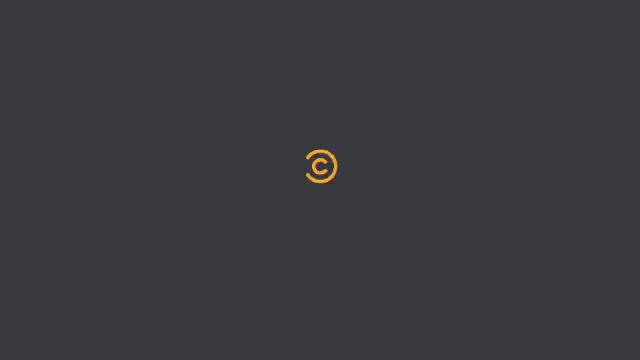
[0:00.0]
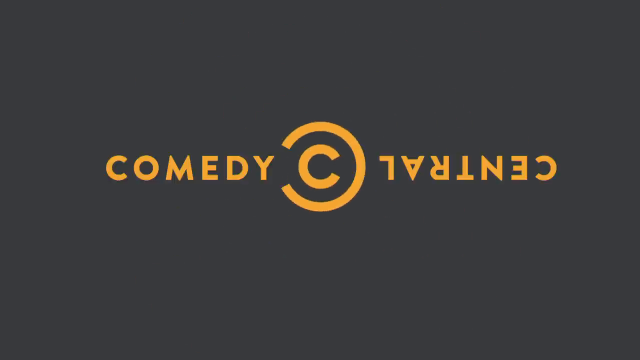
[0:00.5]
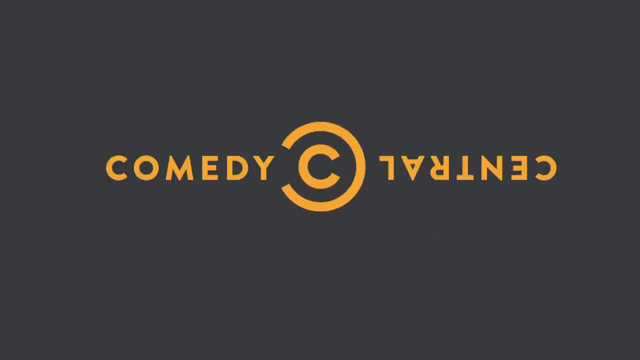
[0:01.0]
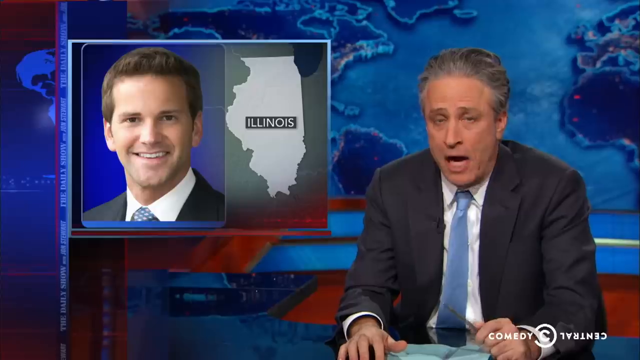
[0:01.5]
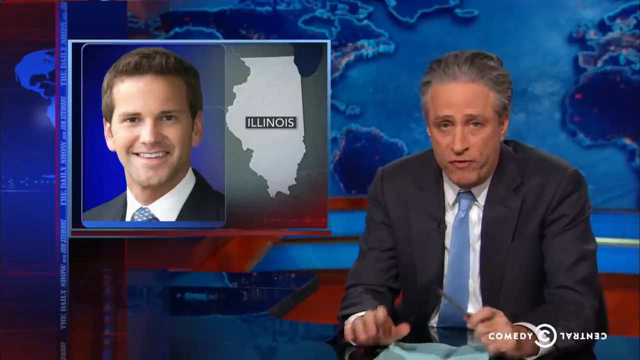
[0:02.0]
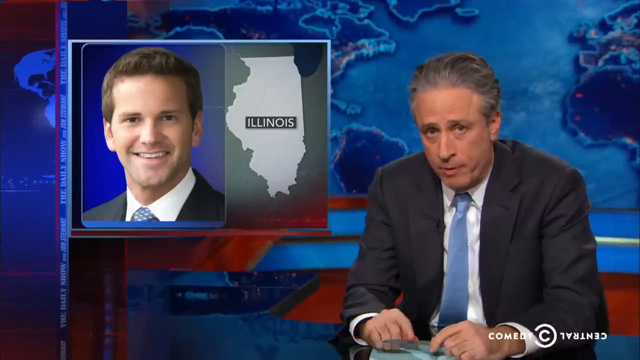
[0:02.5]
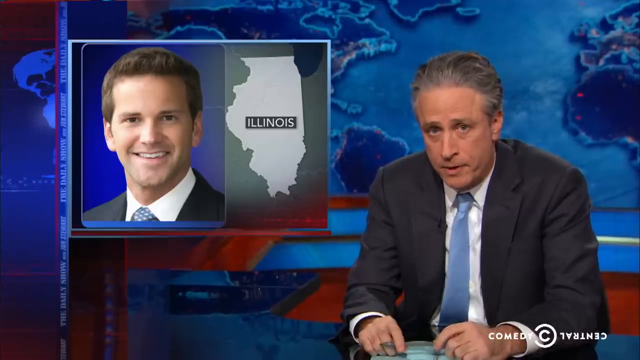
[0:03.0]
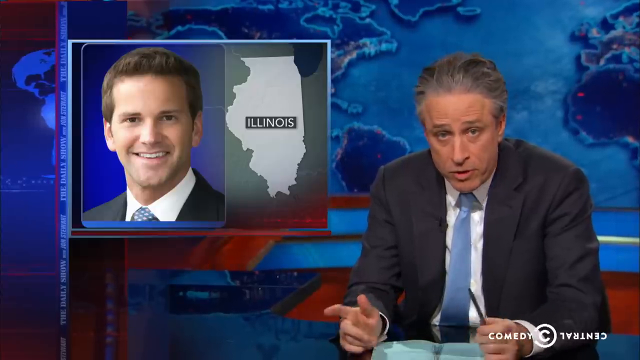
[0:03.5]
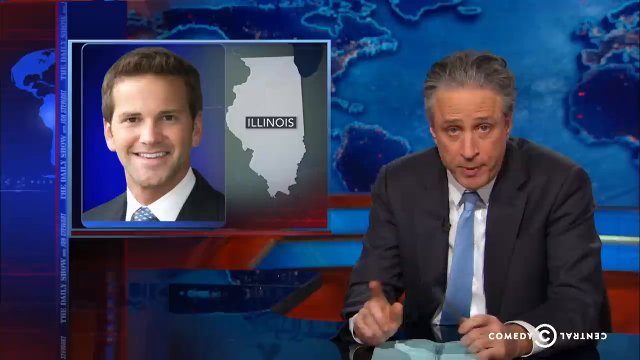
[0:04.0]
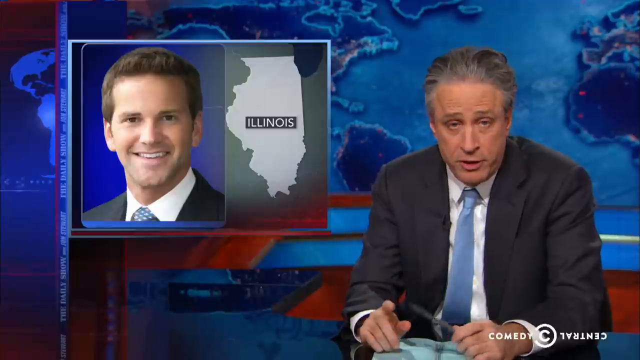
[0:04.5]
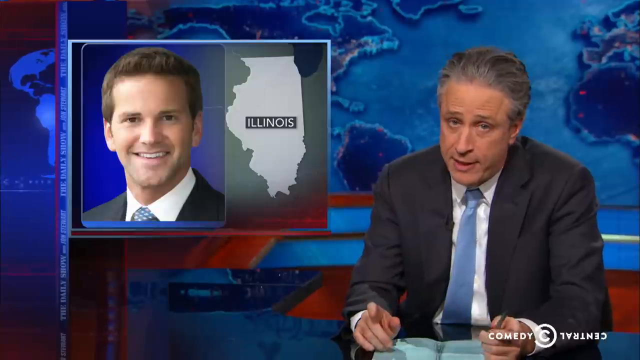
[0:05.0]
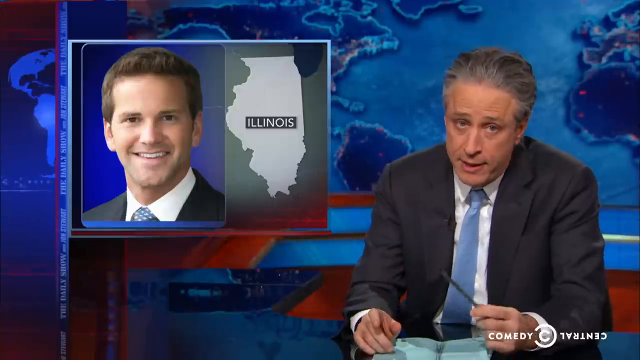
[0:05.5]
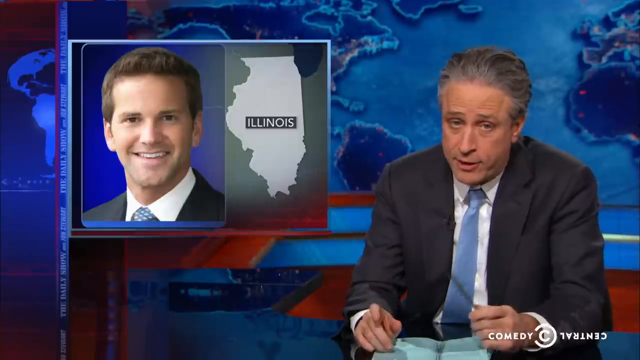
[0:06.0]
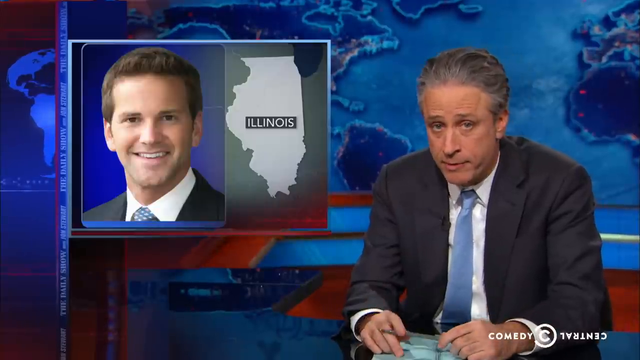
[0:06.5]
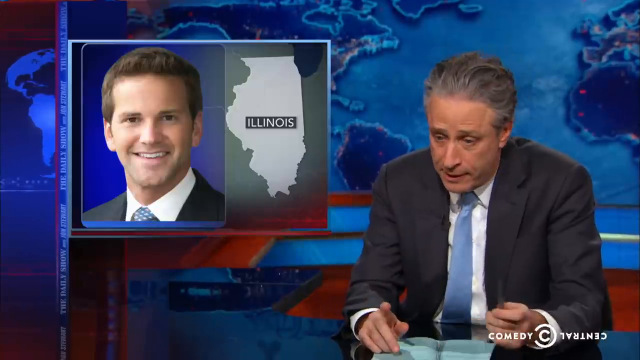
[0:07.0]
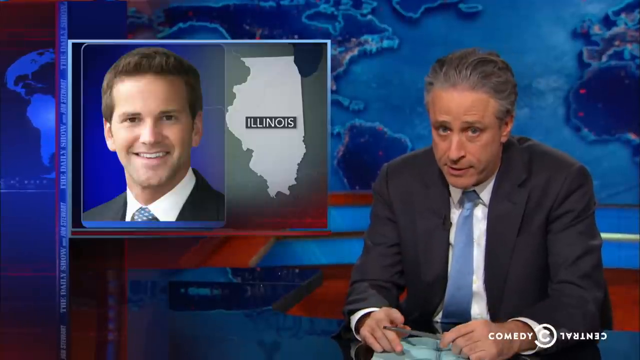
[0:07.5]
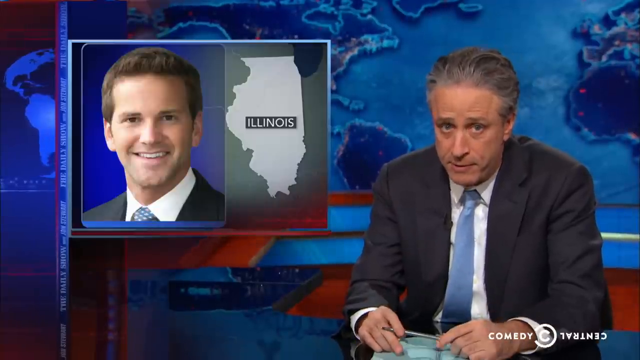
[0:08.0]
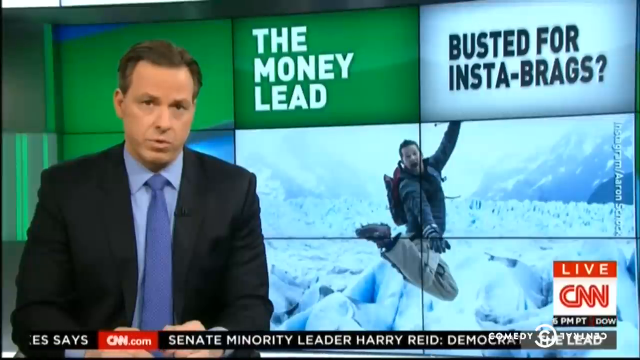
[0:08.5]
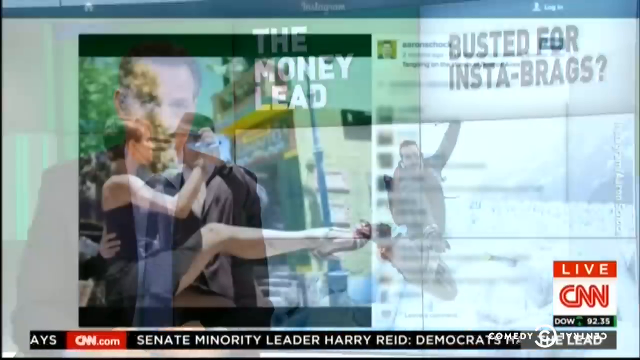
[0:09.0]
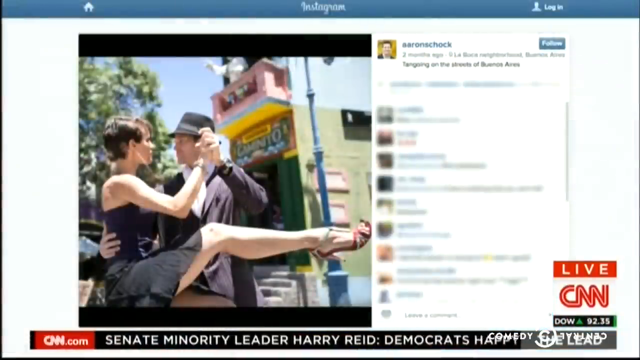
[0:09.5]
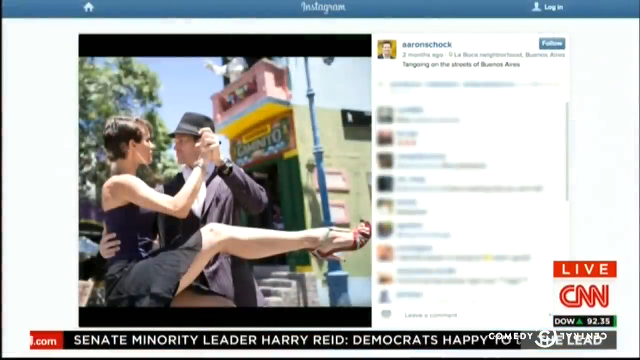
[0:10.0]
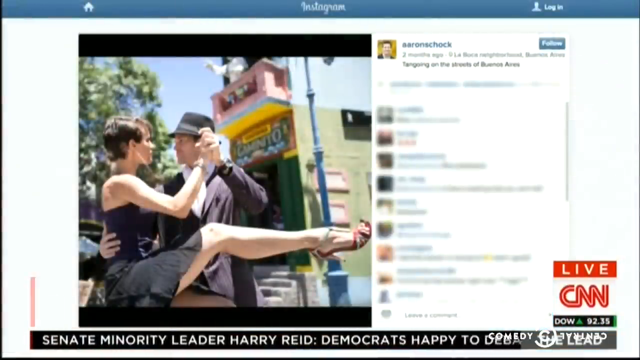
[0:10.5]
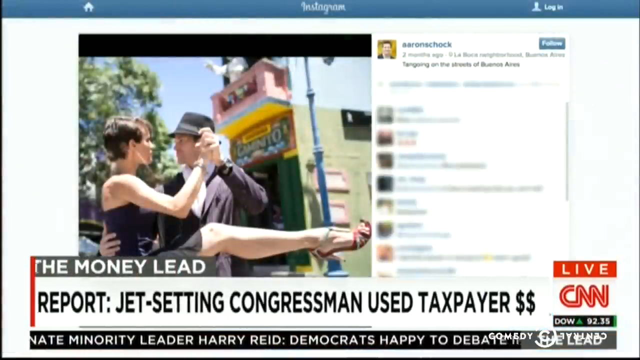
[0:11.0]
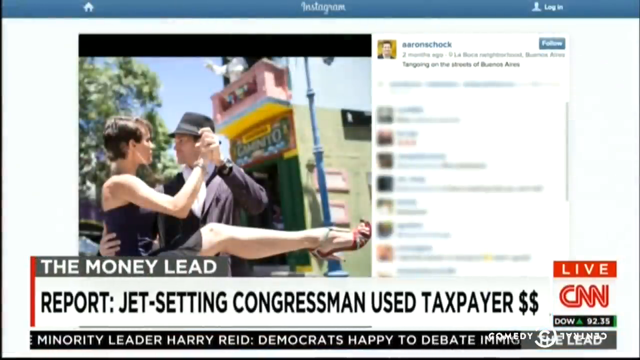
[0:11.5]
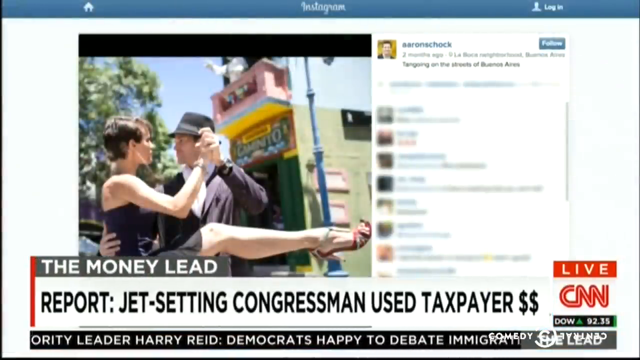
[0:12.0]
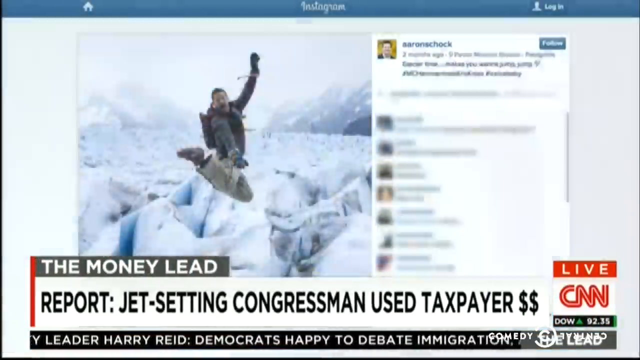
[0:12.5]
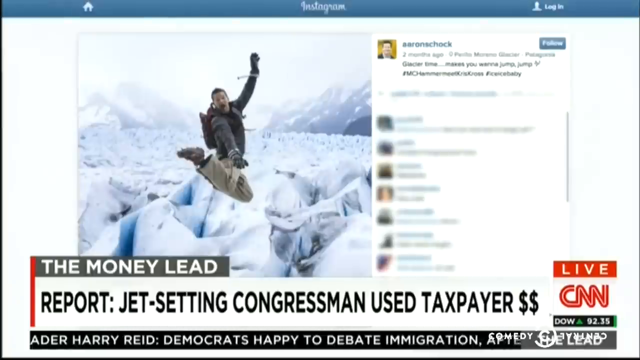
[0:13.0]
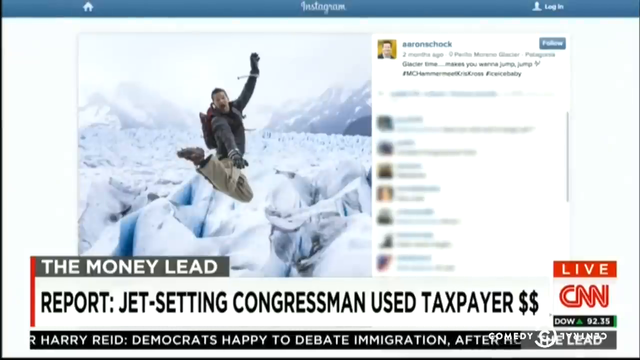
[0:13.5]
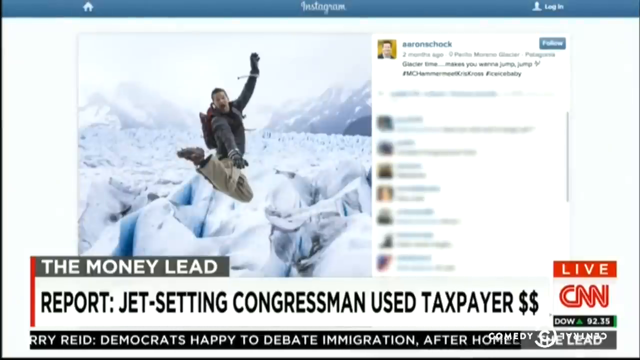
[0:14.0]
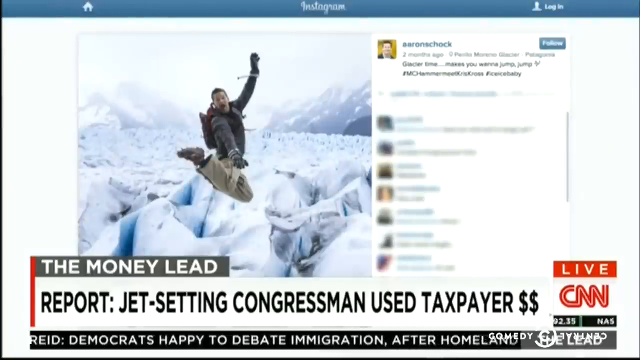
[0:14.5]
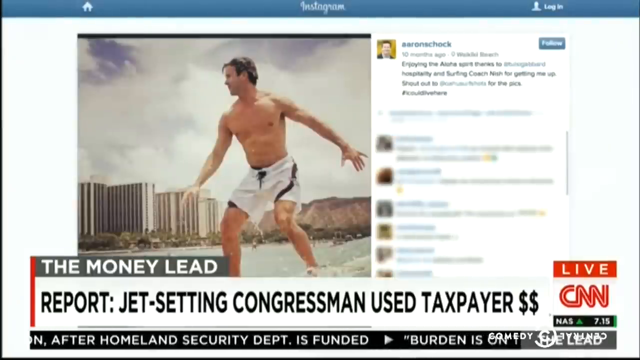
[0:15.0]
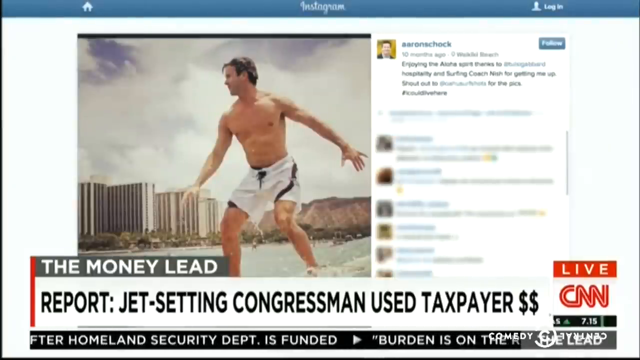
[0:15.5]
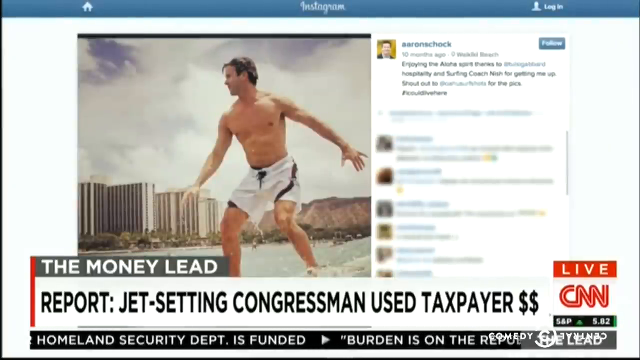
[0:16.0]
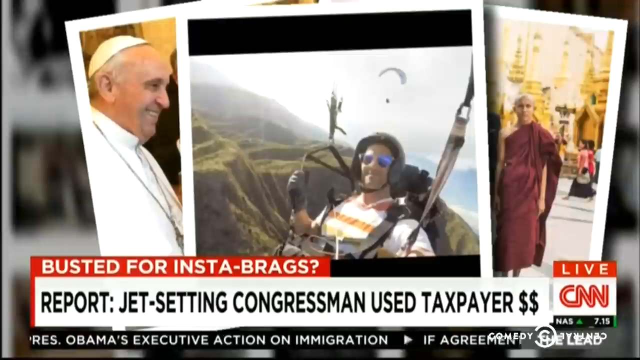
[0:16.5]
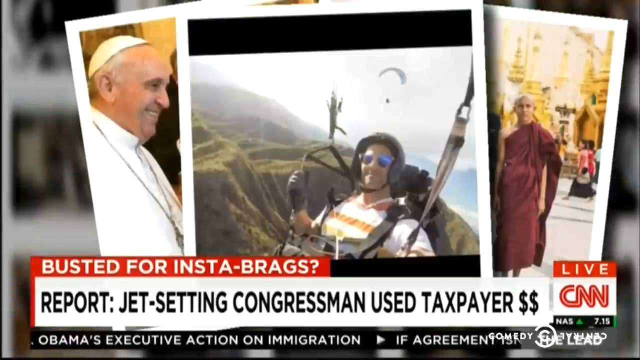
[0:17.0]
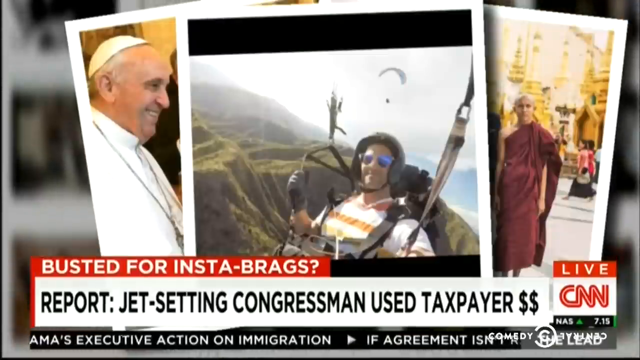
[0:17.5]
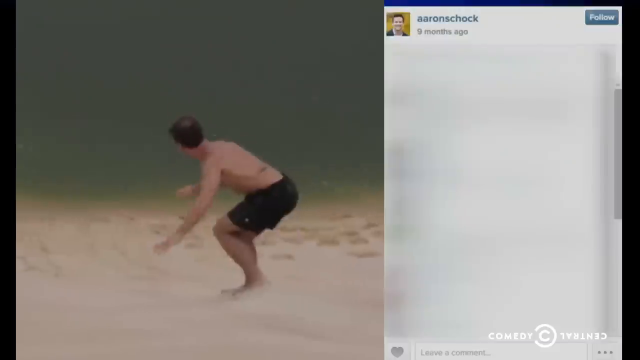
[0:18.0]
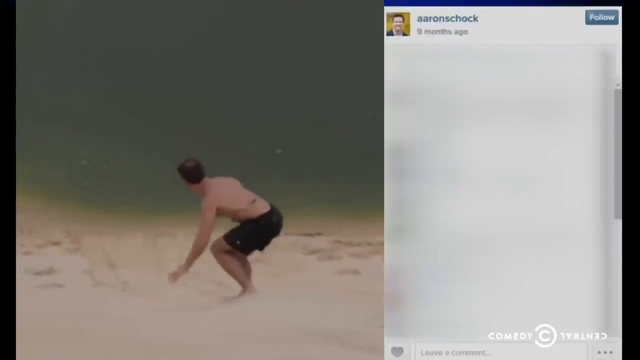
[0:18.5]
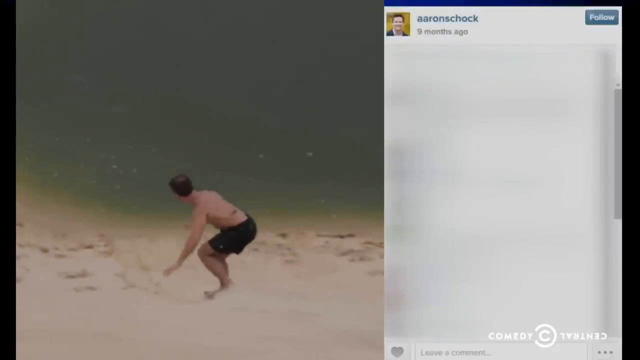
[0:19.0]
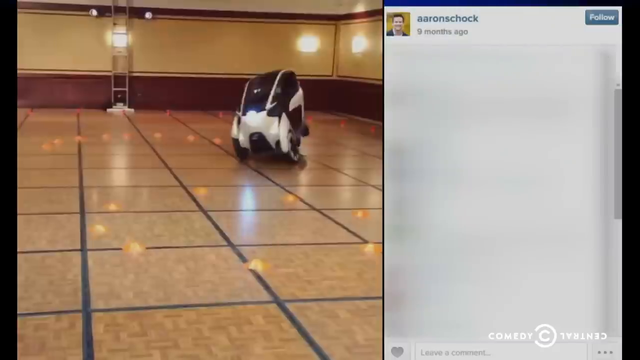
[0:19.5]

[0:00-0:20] The video is from The Daily Show with Jon Stewart. A picture of a man wearing a suit appears next to a graphic of the state of Illinois as the screen cuts from Jon Stewart to this man. A report from CNN says "jet-setting congressman used taxpayer money." The man's name is apparently Aaron Schock, a congressperson from Illinois. Images show him on various trips: in Hawaii, at a glacier, going down a mountain doing something unclear, possibly surfing, hang gliding somewhere, and surfing at some kind of beach.